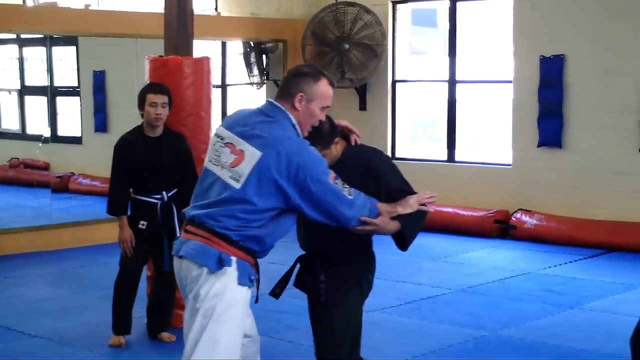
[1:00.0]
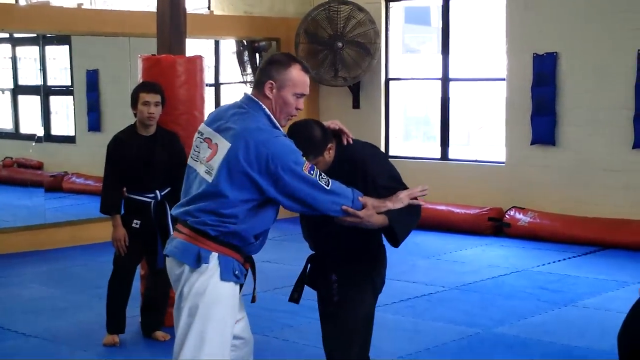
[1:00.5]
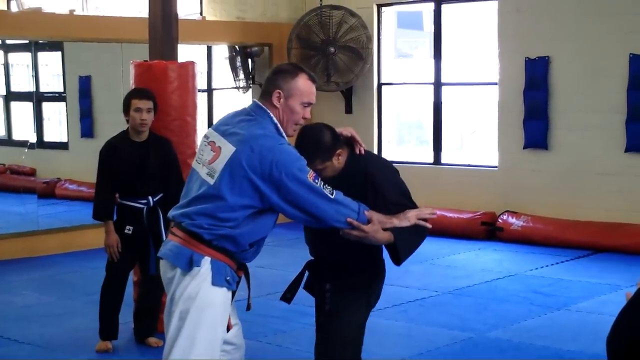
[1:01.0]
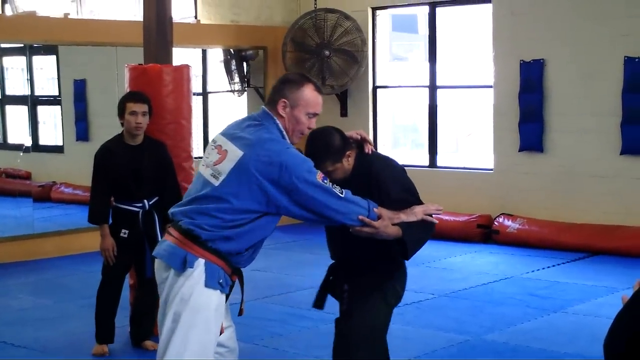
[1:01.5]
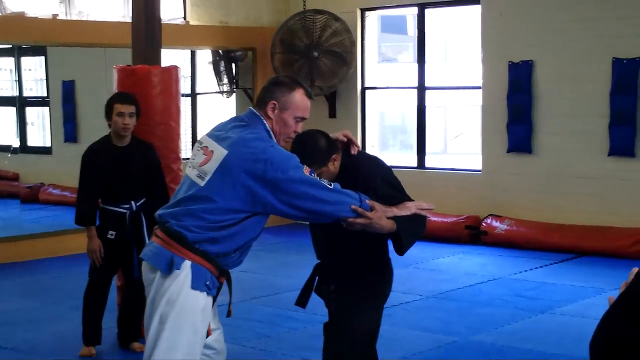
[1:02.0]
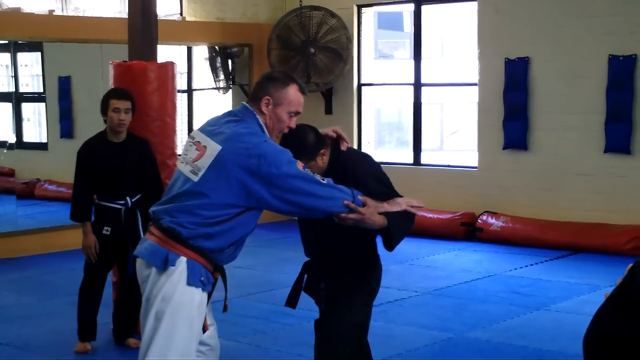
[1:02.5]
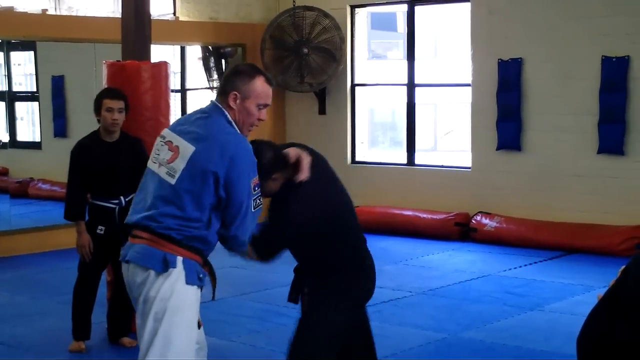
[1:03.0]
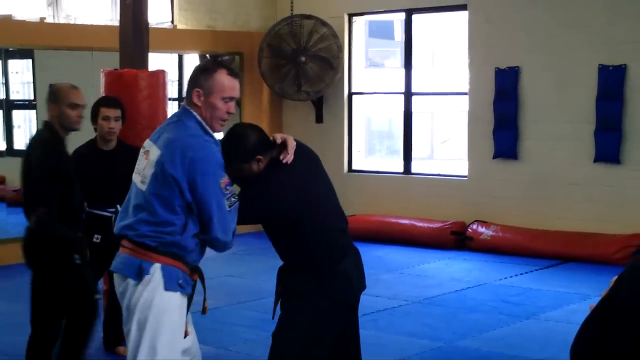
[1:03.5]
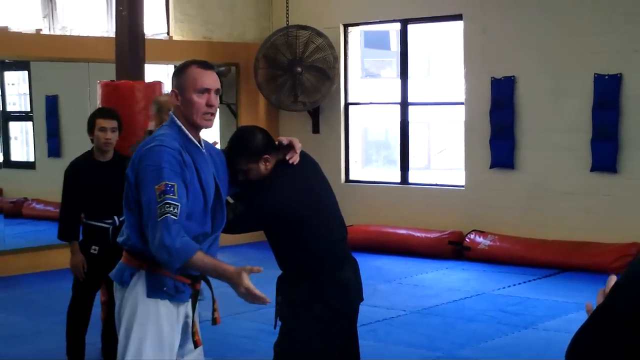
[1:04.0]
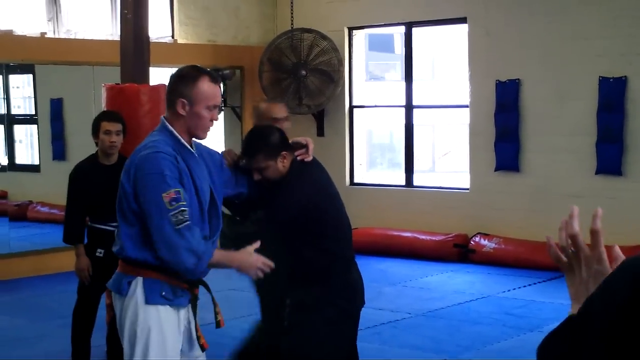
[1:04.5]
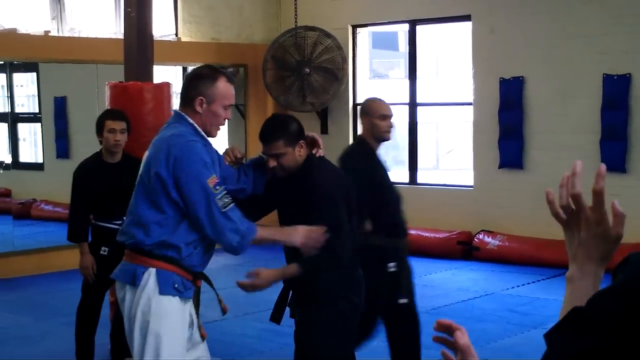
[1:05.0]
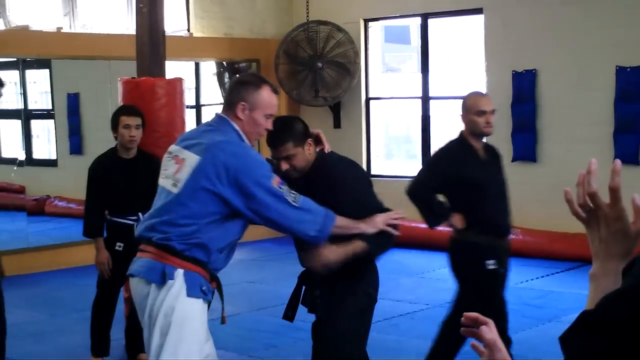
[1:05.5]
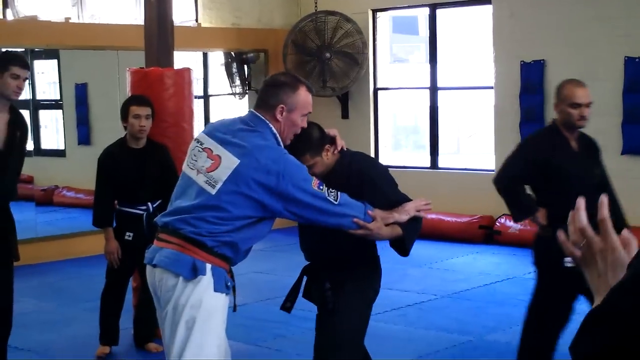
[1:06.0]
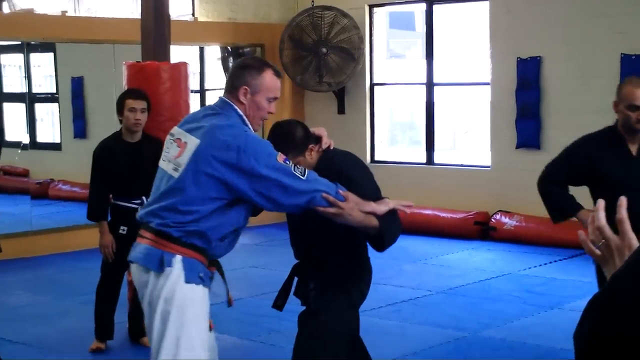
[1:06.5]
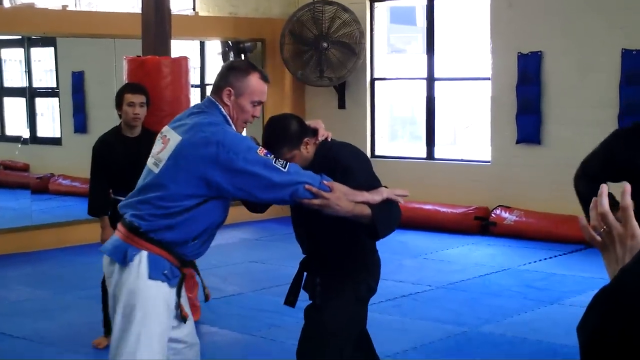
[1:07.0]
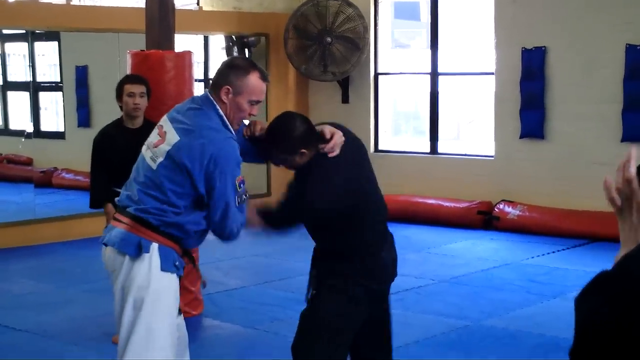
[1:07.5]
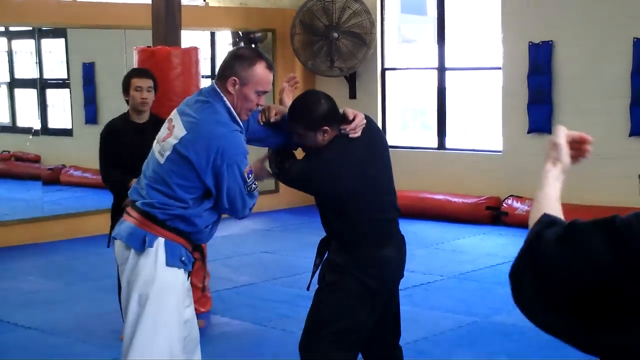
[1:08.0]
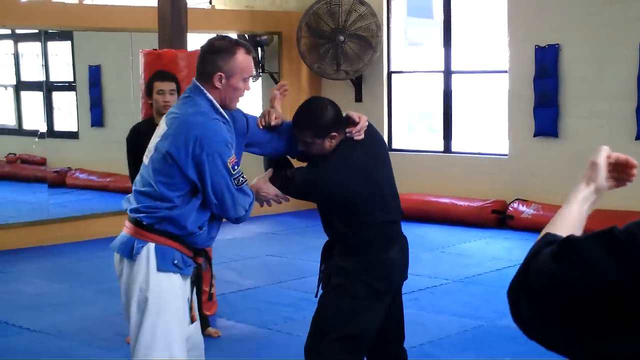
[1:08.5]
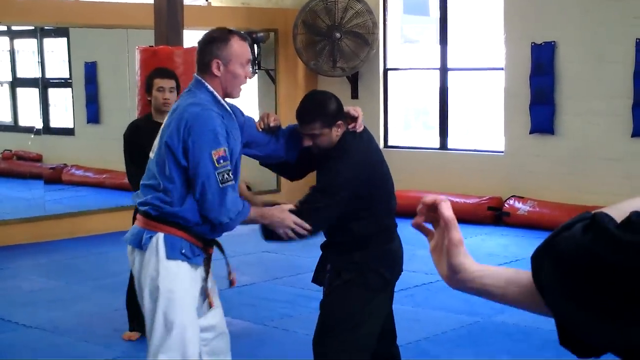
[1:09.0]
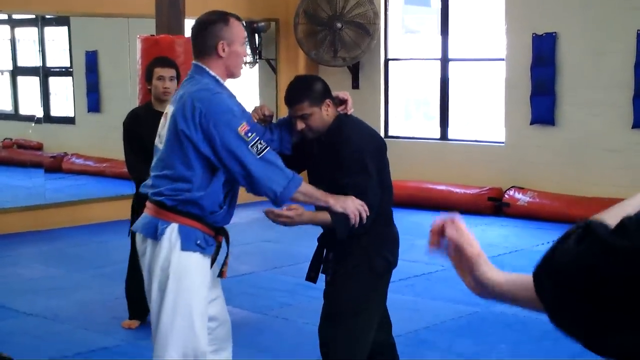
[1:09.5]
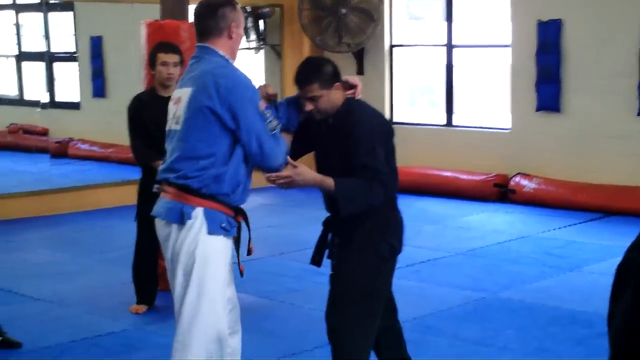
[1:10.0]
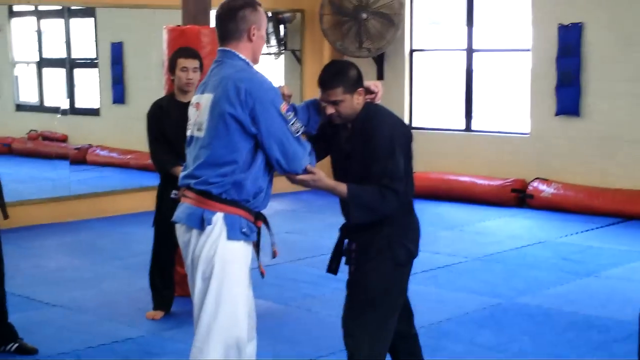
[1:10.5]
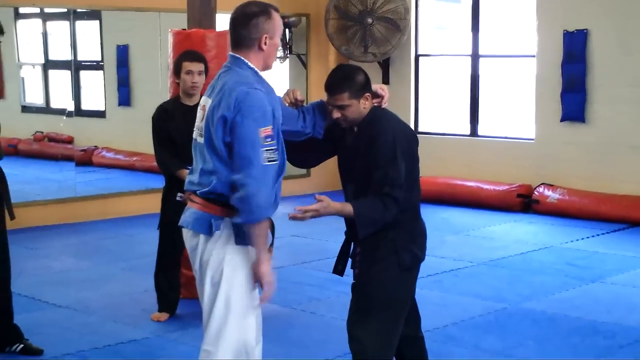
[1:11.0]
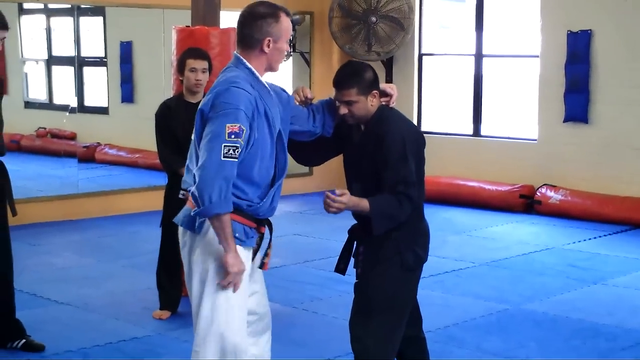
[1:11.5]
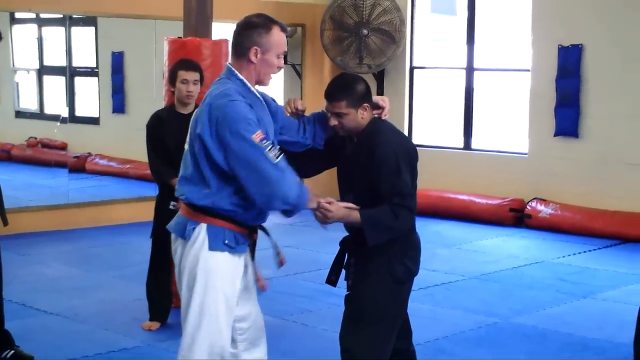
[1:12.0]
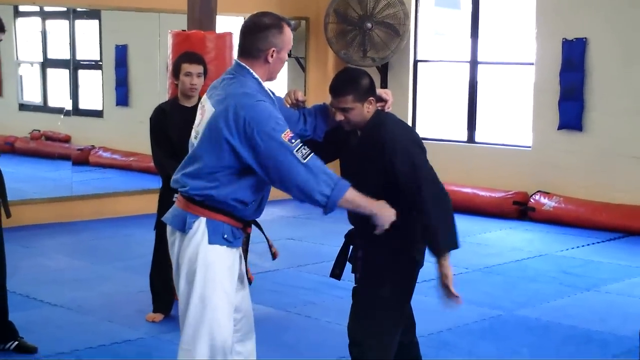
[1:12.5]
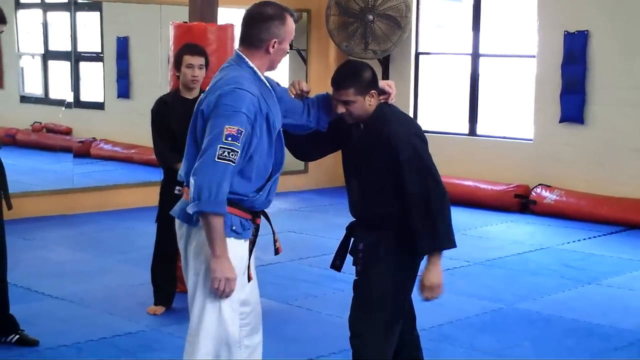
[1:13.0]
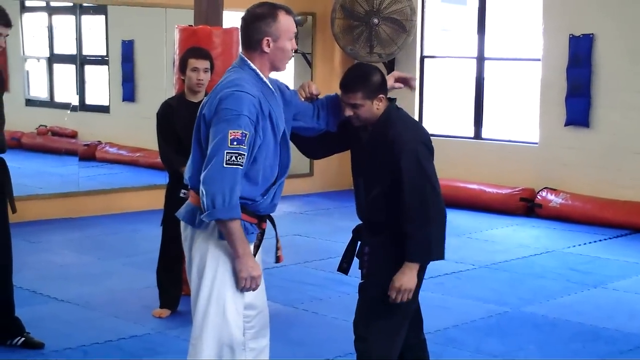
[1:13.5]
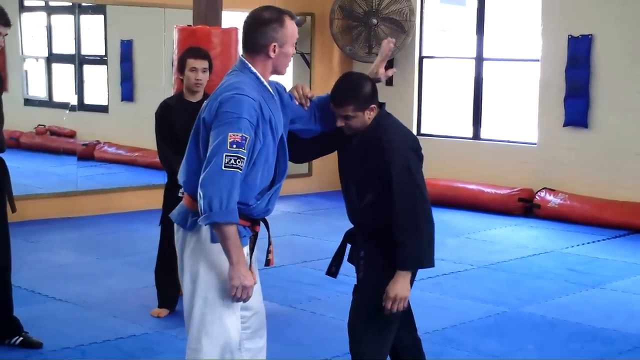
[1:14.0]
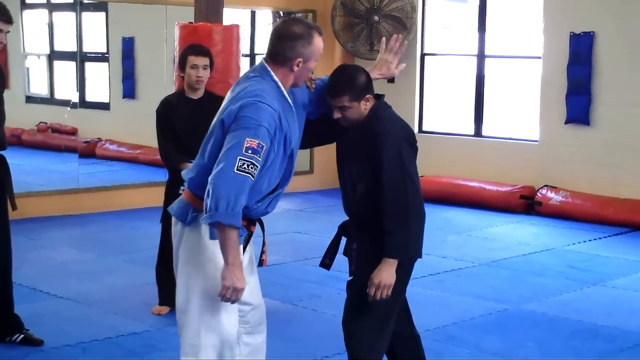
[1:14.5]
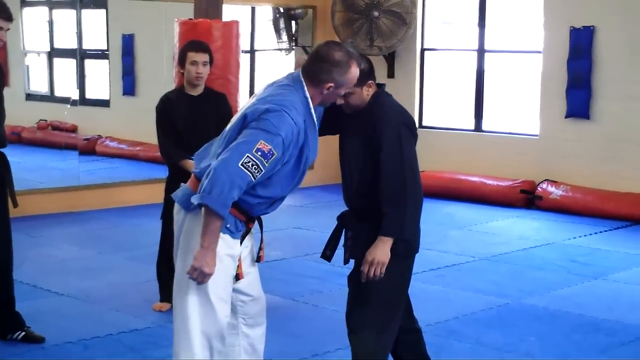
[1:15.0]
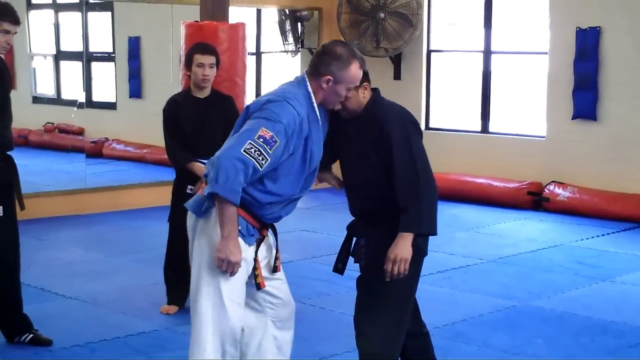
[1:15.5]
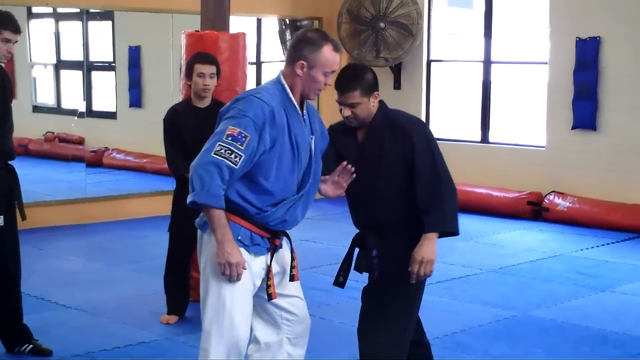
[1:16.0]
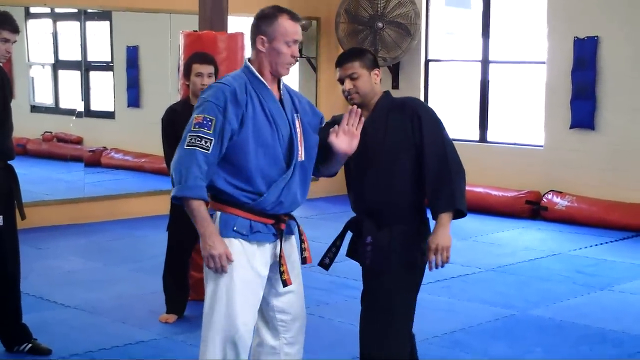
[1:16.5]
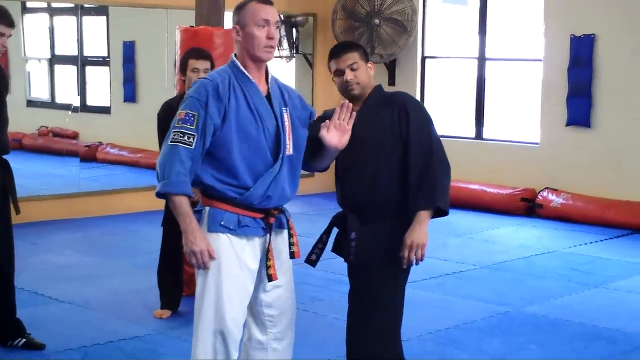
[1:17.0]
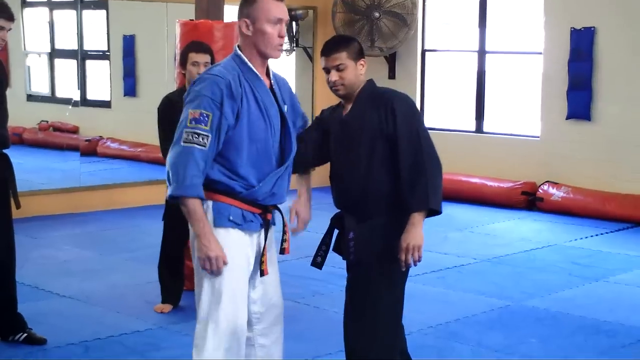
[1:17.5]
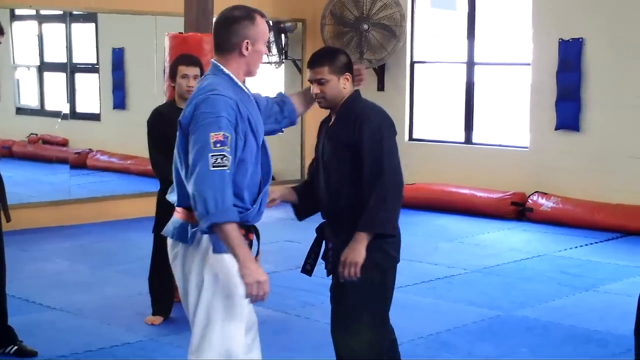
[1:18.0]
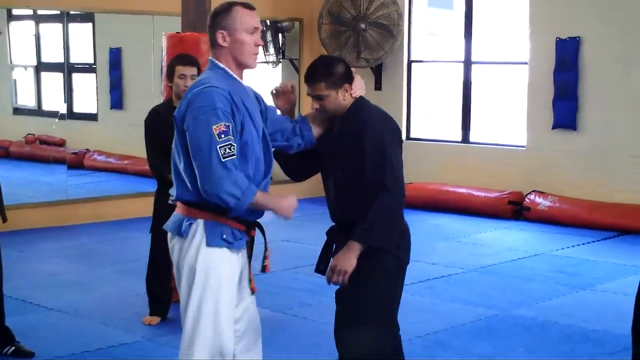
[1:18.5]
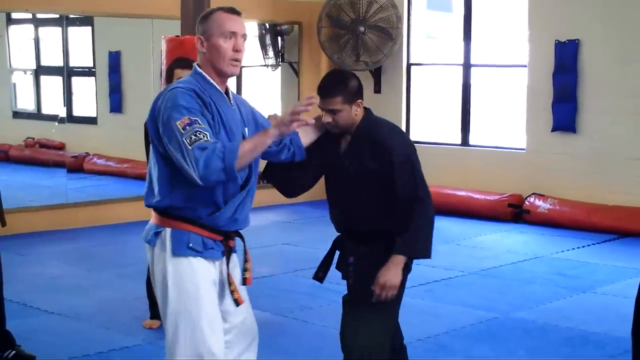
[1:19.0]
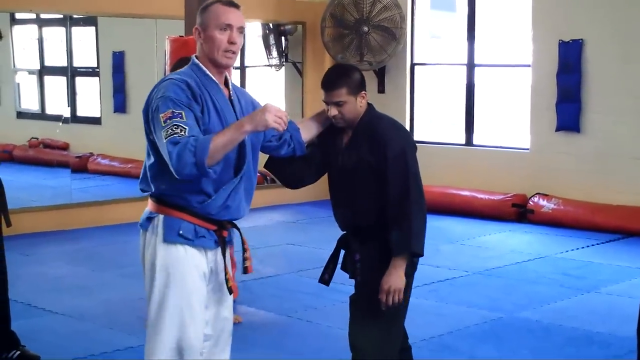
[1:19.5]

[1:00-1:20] The instructor of a martial arts class uses one of the students to demonstrate a move. He shows with his hand how to grasp the student's hand, then, with his arm around the back of the student's neck, uses his other hand to push the student's arm through underneath the arm that is around the neck. Other students gather around and watch. The instructor wears a blue jacket and several colored belts, including red and black, while the students are dressed in black outfits with belts of various colors according to their ability. The gym is mirrored on one side and has a blue cushioned floor. A red bumper goes around the pole in the middle of the room, and bumpers are on the floor underneath the window. A very large fan is in the upper left portion of the gym.